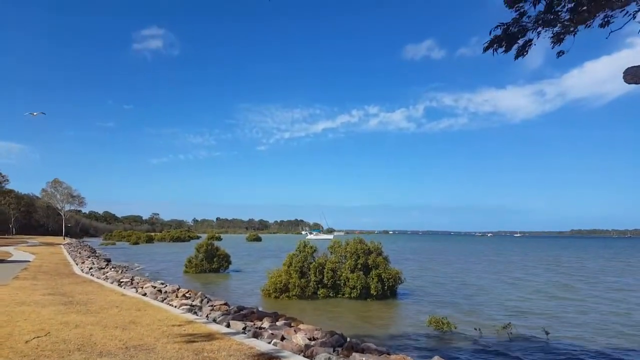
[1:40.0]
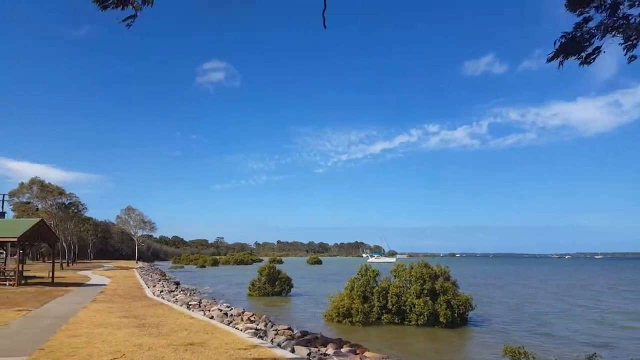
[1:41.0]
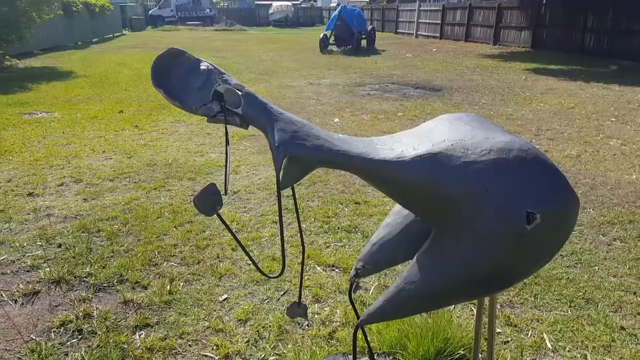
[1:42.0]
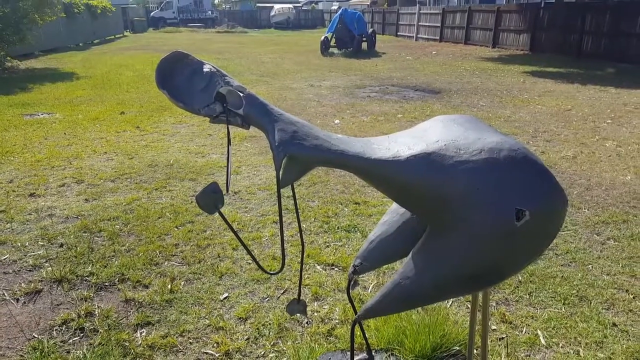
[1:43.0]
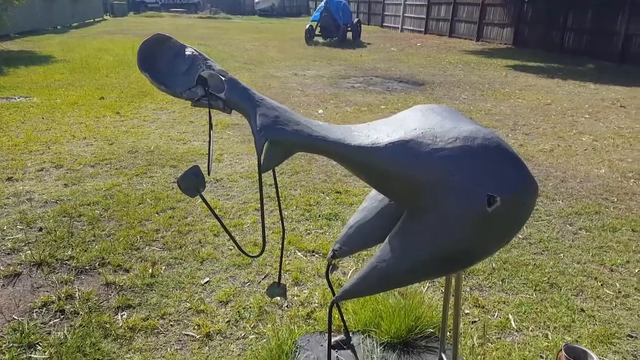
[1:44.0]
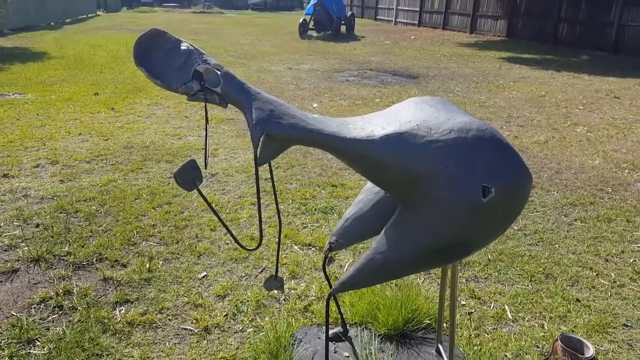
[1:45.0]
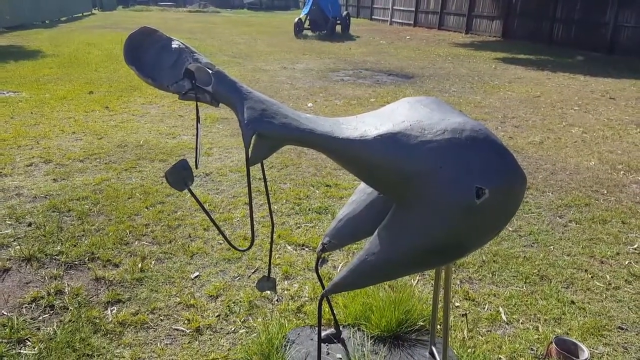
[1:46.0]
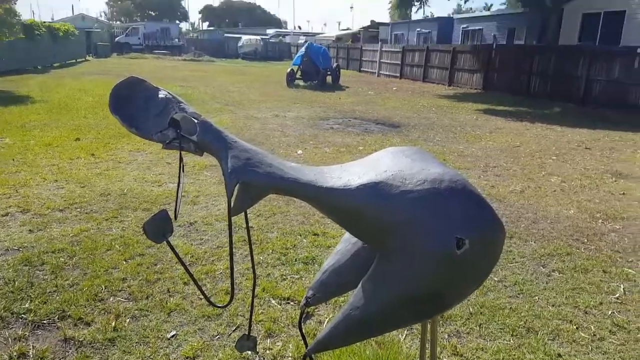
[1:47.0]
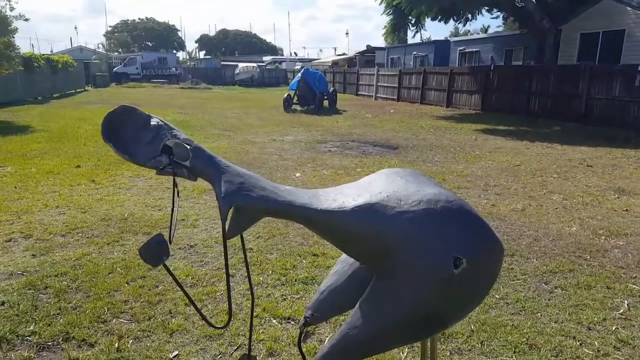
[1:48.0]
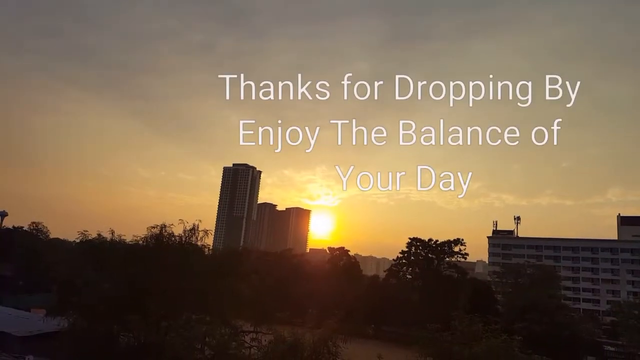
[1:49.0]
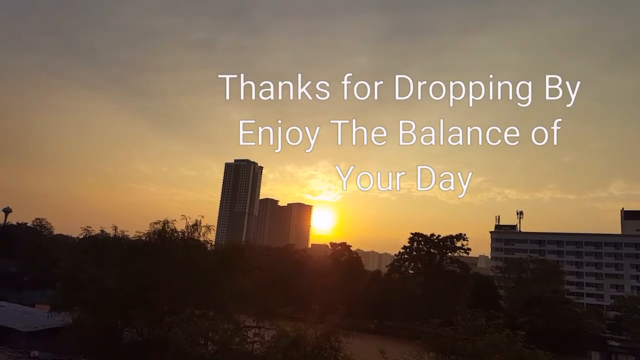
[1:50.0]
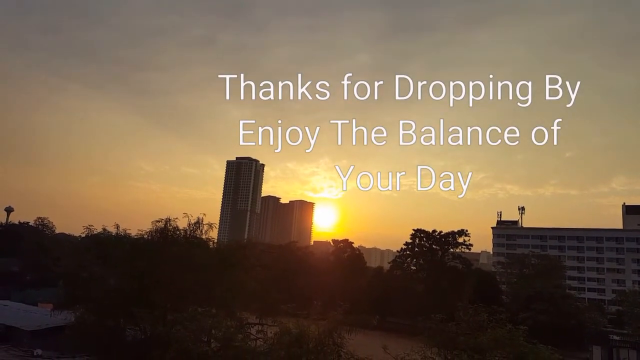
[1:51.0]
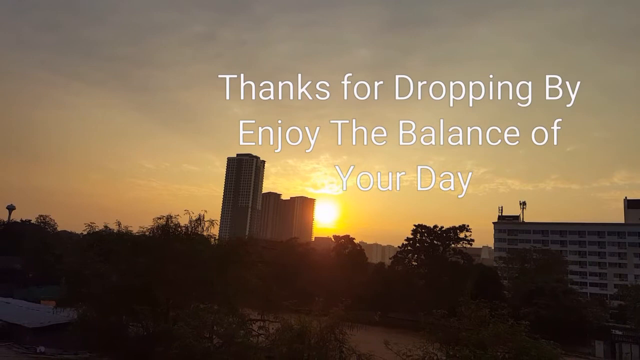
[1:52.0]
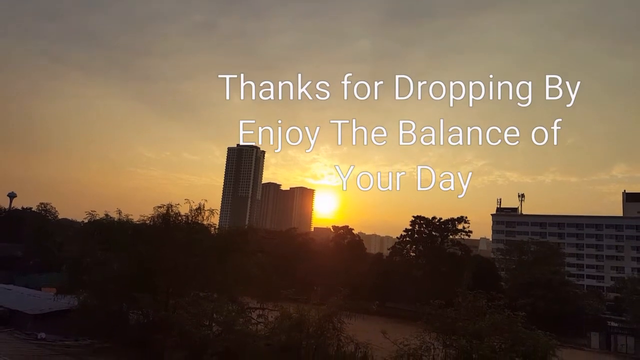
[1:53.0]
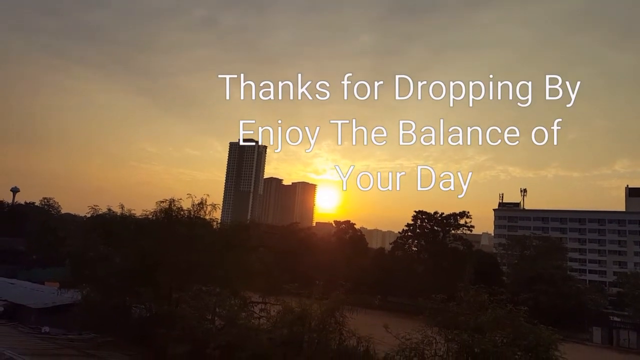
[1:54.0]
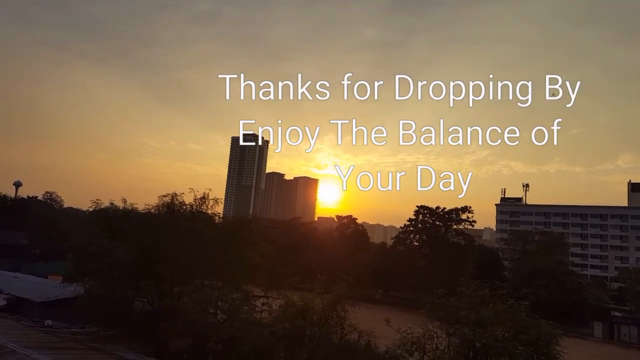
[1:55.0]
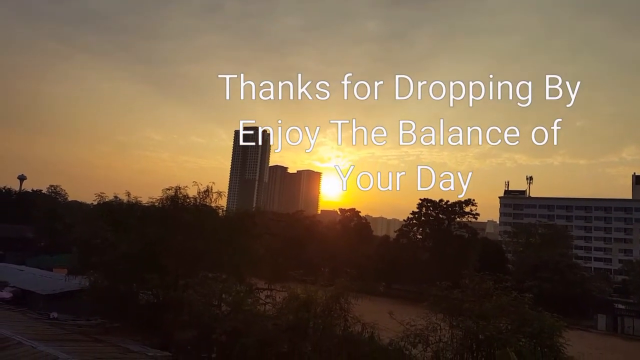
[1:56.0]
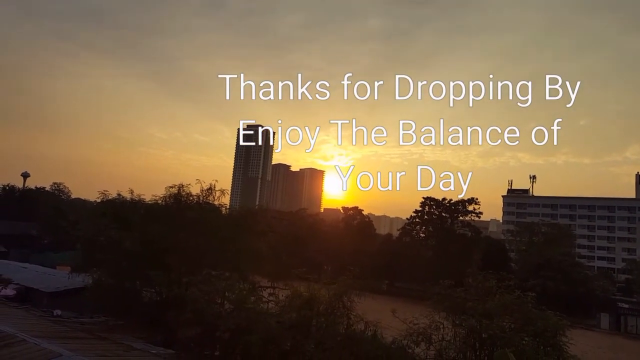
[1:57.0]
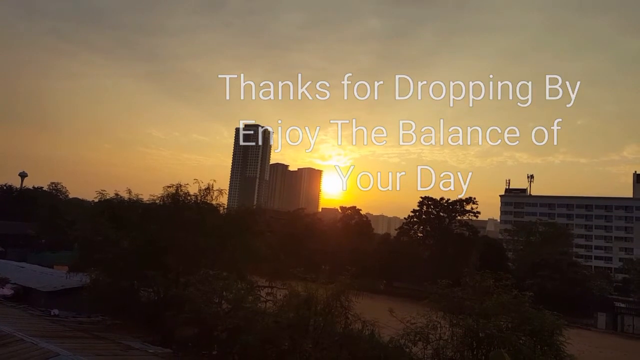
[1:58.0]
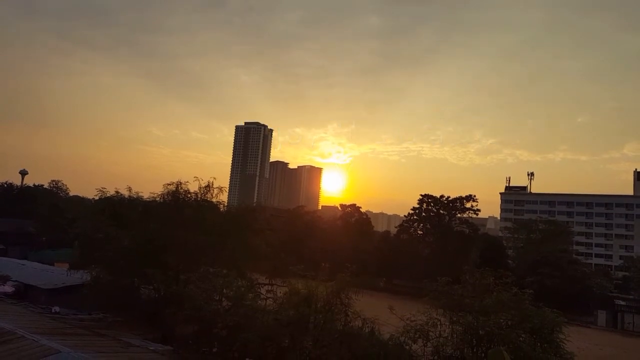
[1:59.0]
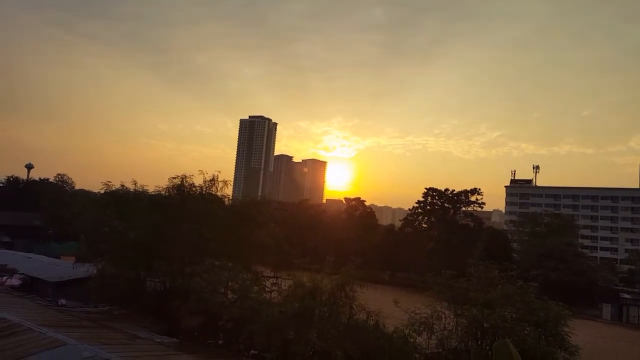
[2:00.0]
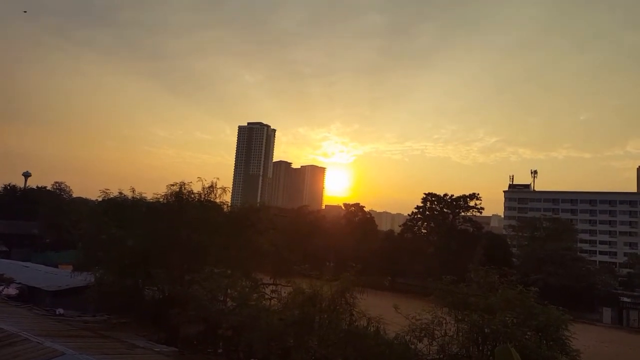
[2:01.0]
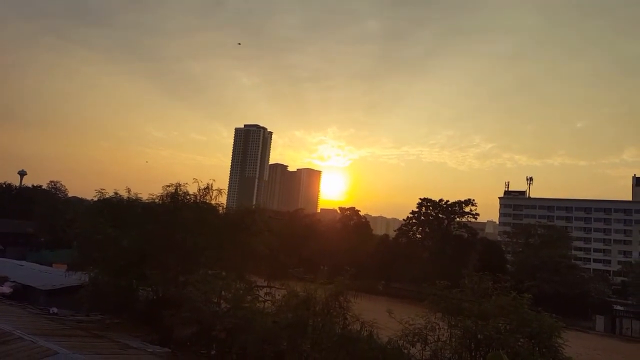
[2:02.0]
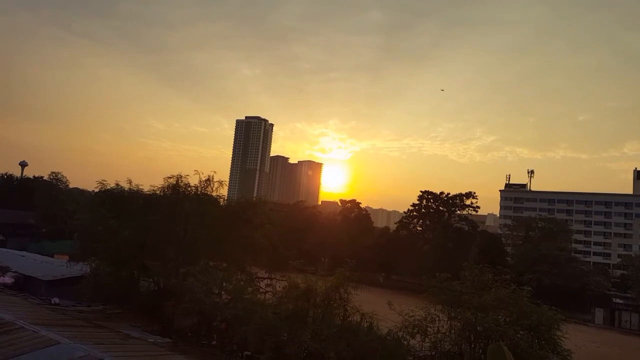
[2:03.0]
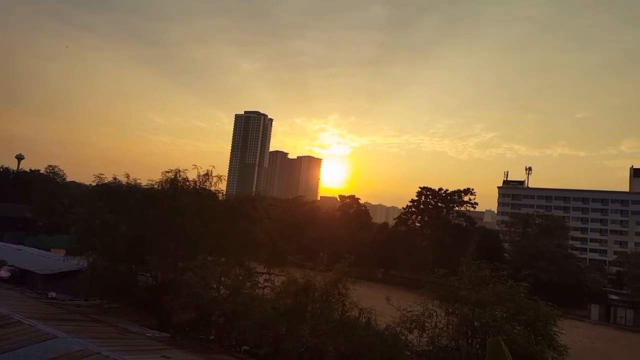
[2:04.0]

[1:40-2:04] The camera looks over a lake with a rocky shore and a pathway going around the lake, with yellow grass on each side of the path. Suddenly it focuses on what looks like an anchor, gray in color, with two pointed ends at the bottom. In the background are a flat grassy area and a wagon with a tarp over it. The video then transitions to a sunset with buildings and some trees against the horizon; the sky is pale blue and becomes orange near the sun. White text reads "Thanks for dropping by enjoy the balance of your day", which looks like the outro of the video. The camera stares at the sunset and orange sky, a little shaky, and a single bird flies across the sky.